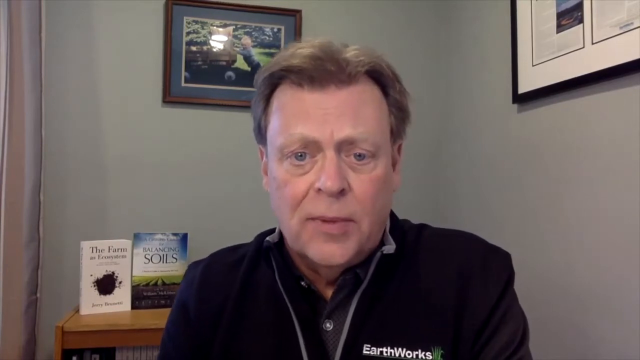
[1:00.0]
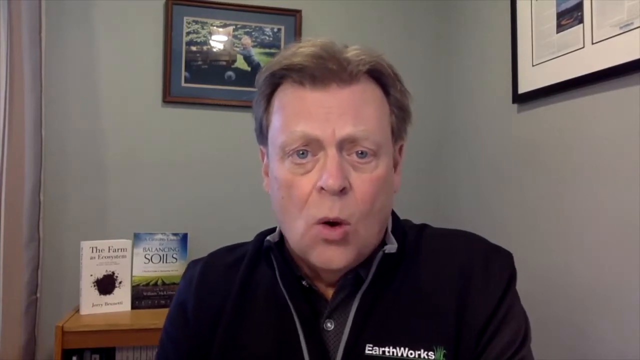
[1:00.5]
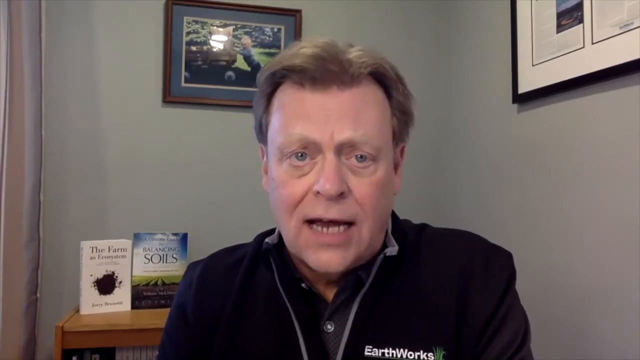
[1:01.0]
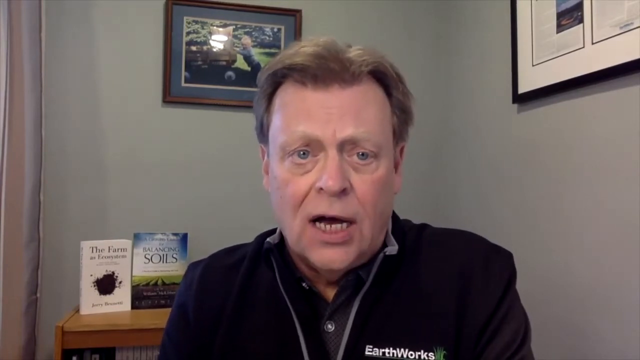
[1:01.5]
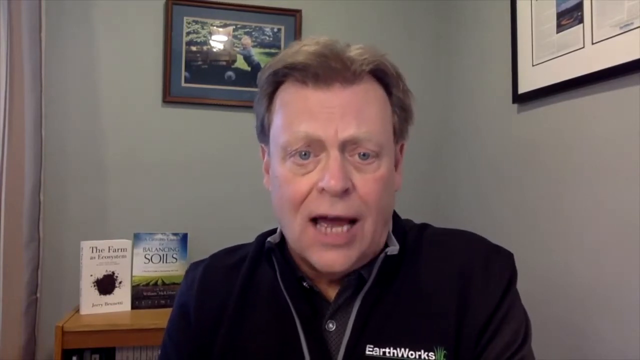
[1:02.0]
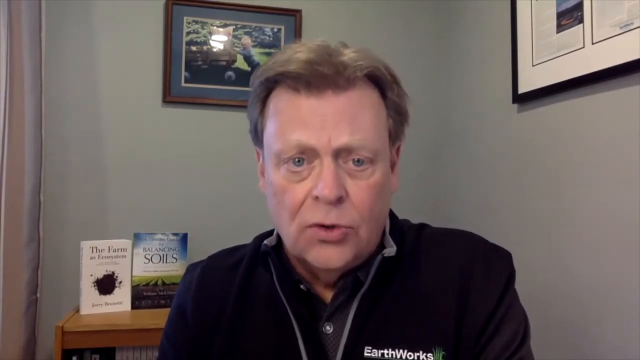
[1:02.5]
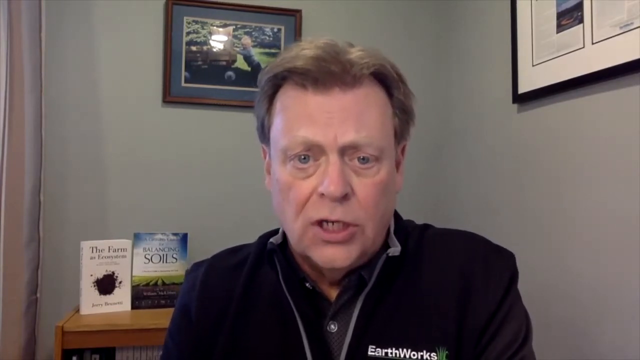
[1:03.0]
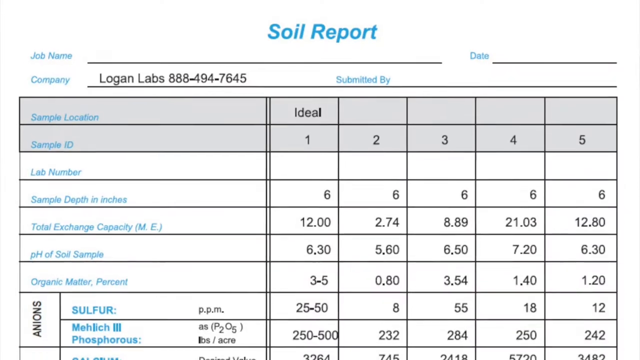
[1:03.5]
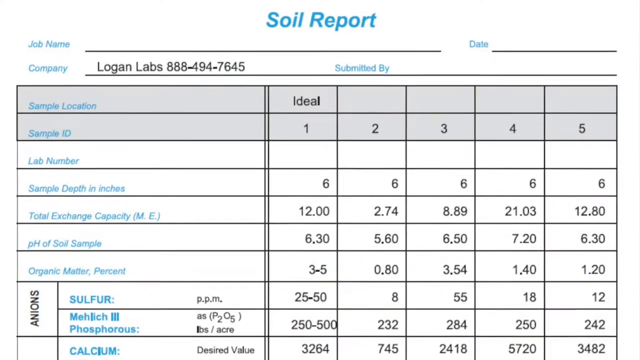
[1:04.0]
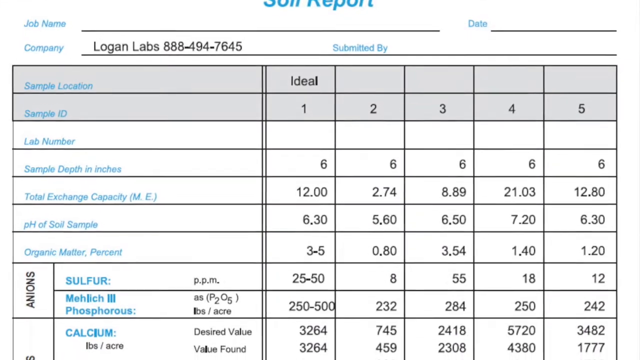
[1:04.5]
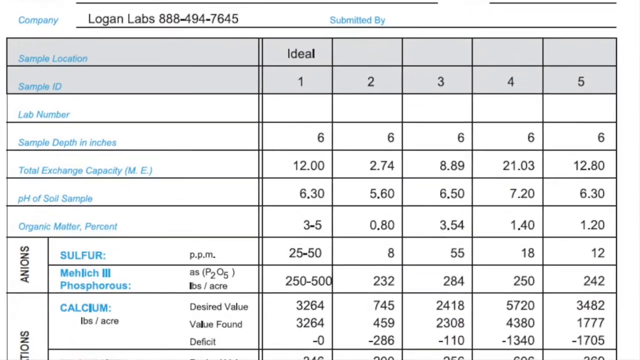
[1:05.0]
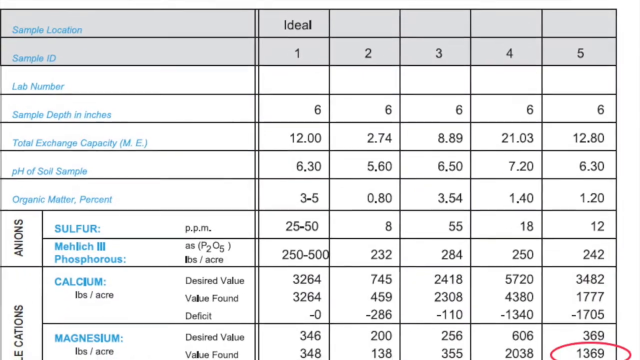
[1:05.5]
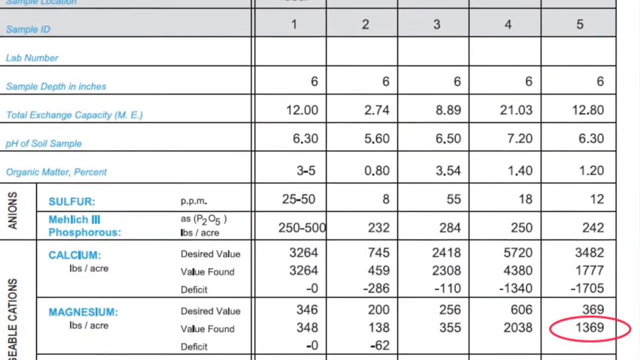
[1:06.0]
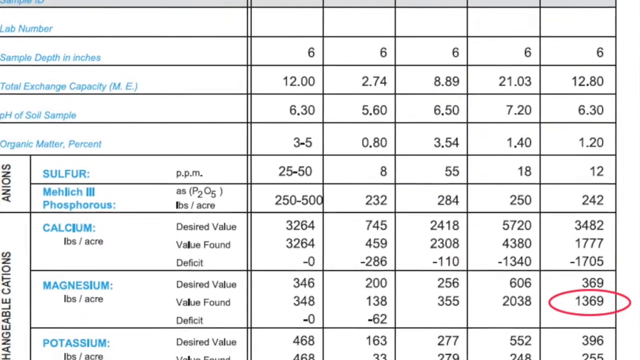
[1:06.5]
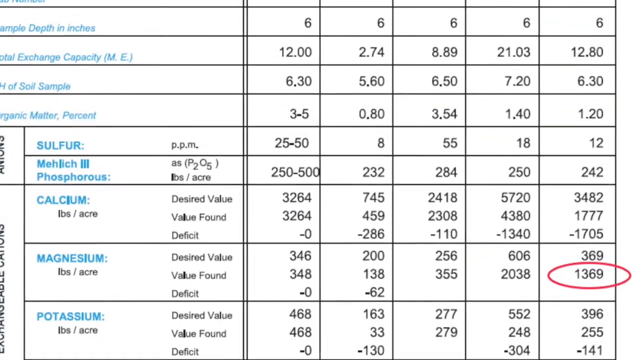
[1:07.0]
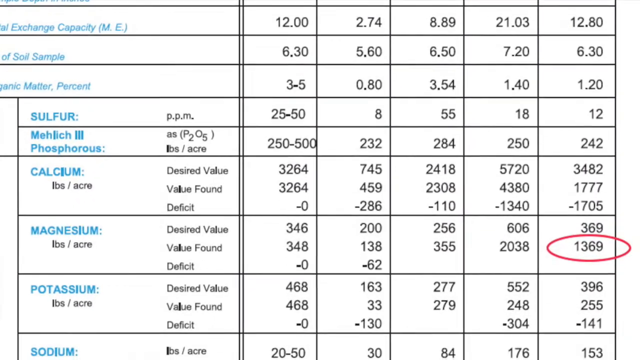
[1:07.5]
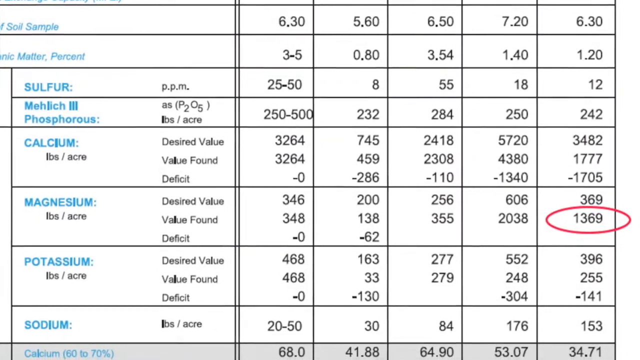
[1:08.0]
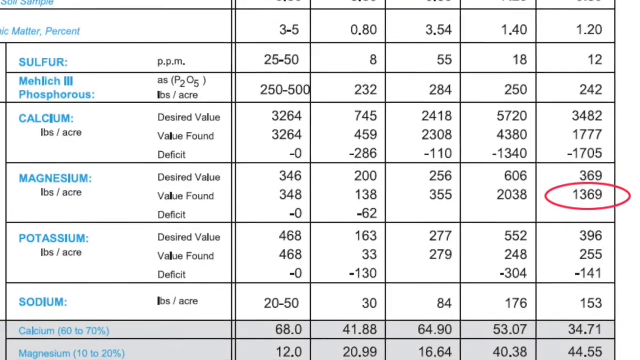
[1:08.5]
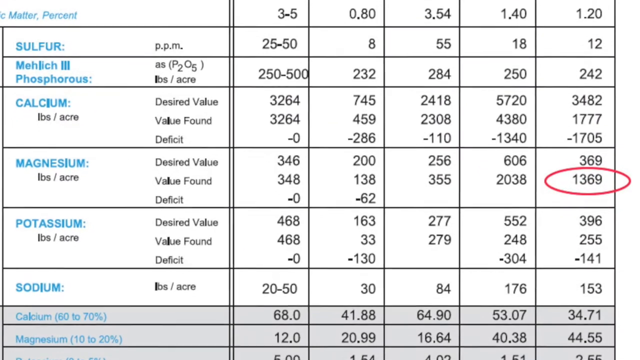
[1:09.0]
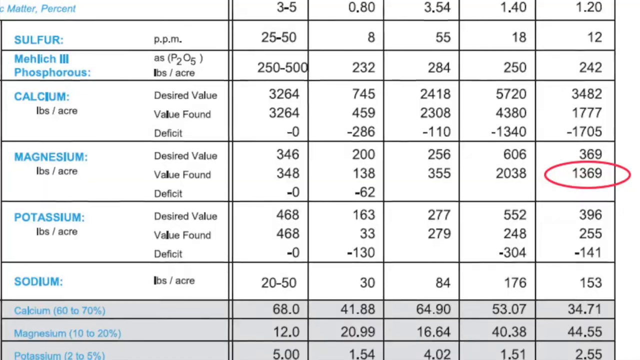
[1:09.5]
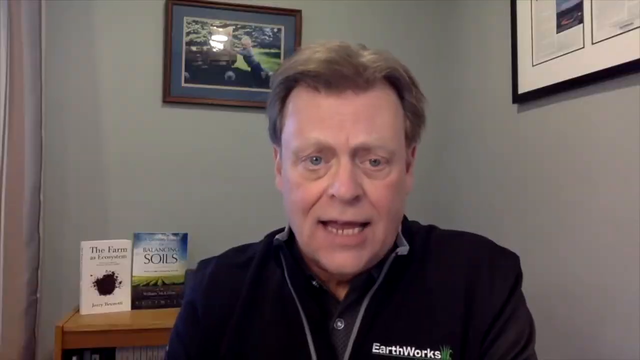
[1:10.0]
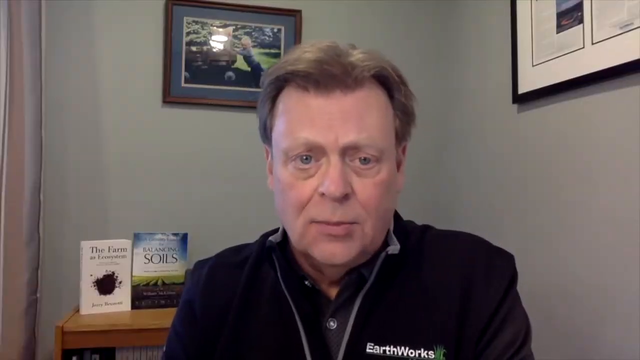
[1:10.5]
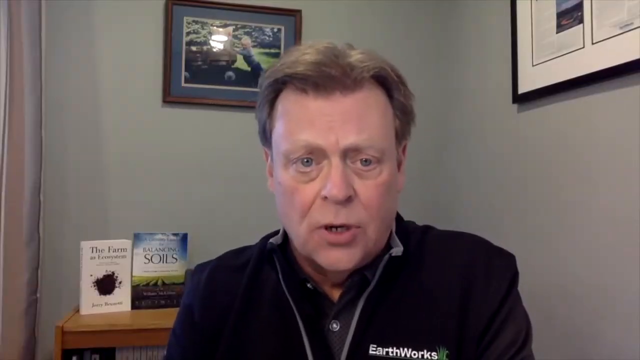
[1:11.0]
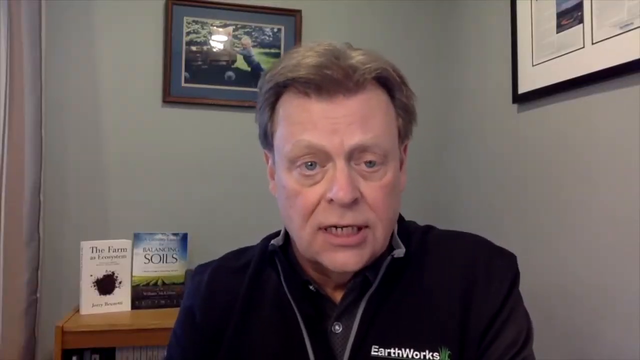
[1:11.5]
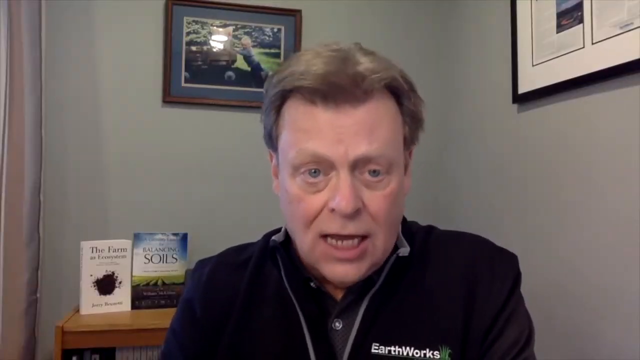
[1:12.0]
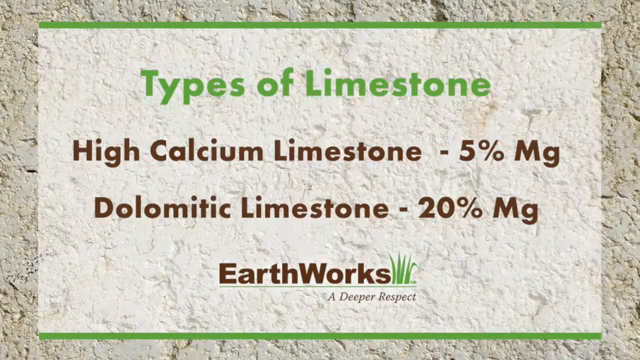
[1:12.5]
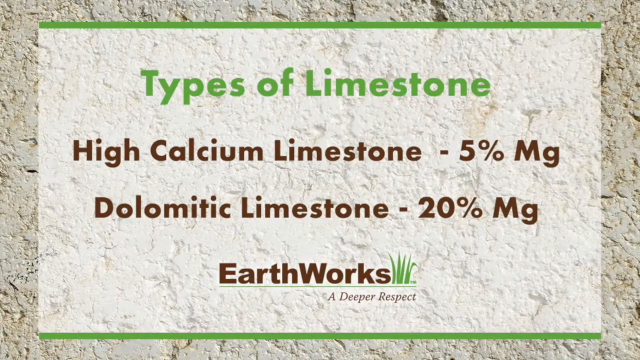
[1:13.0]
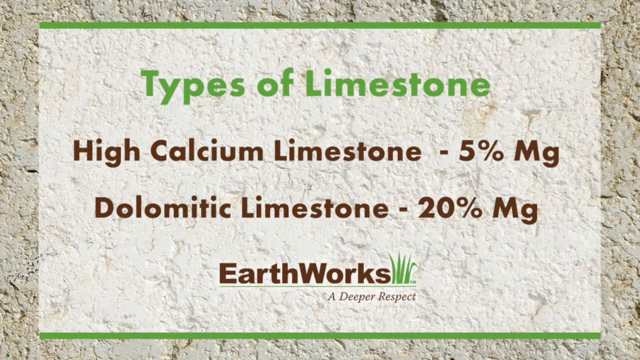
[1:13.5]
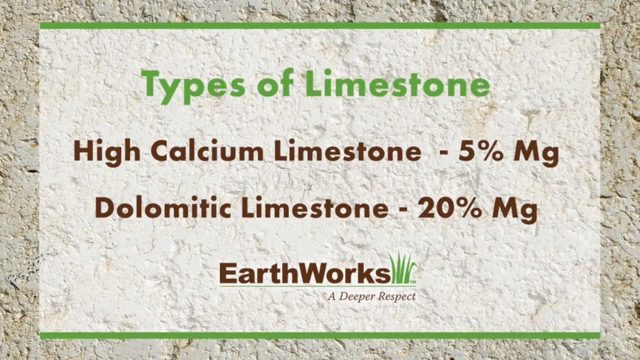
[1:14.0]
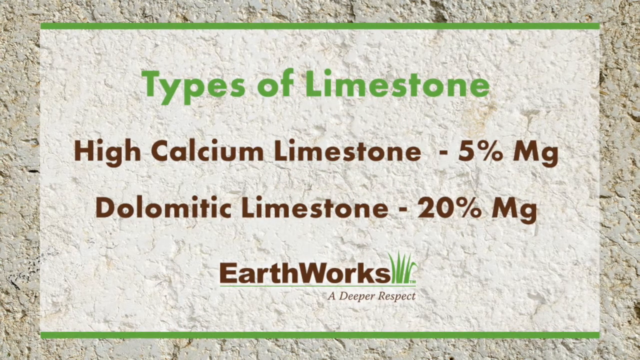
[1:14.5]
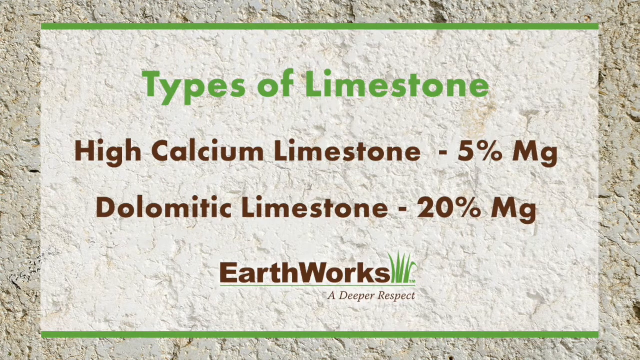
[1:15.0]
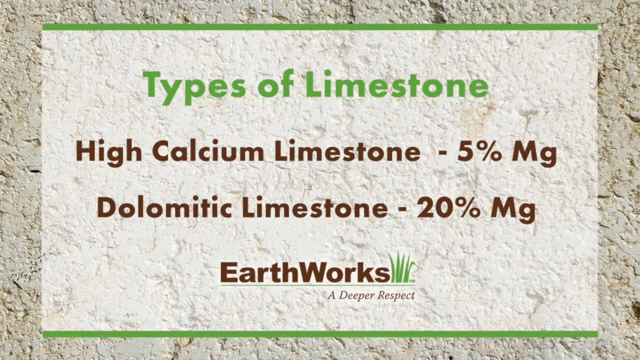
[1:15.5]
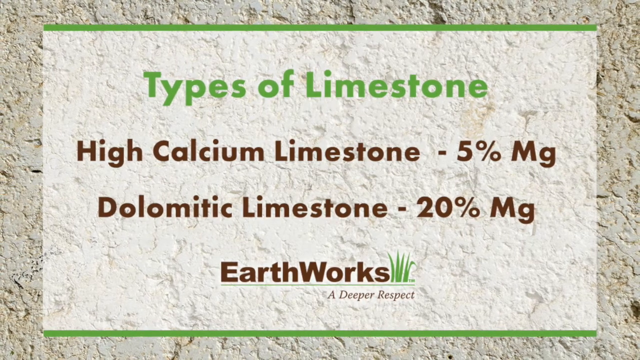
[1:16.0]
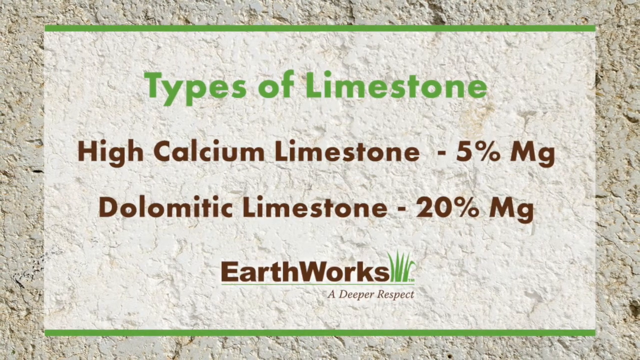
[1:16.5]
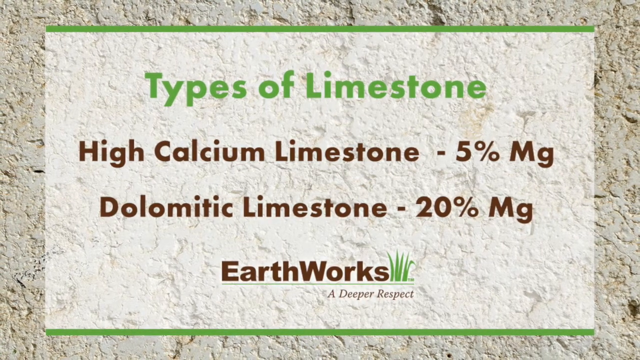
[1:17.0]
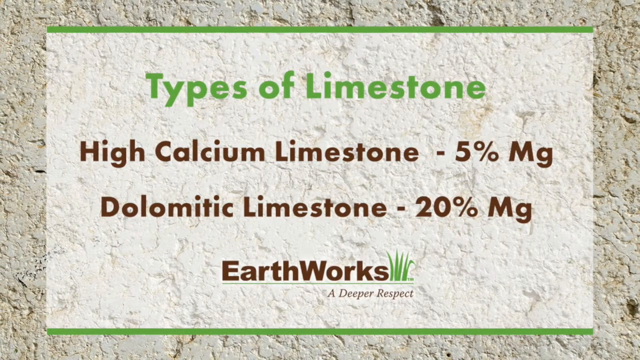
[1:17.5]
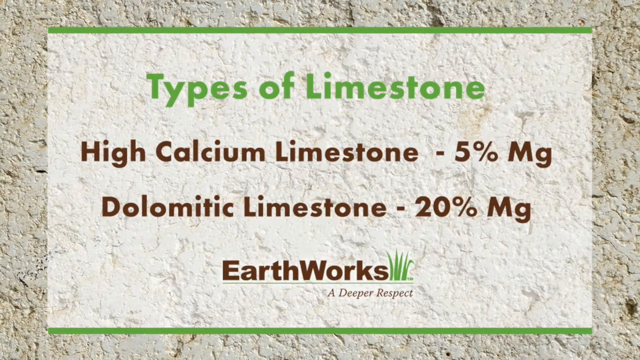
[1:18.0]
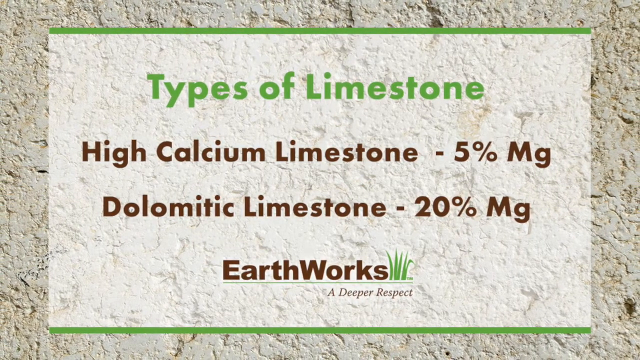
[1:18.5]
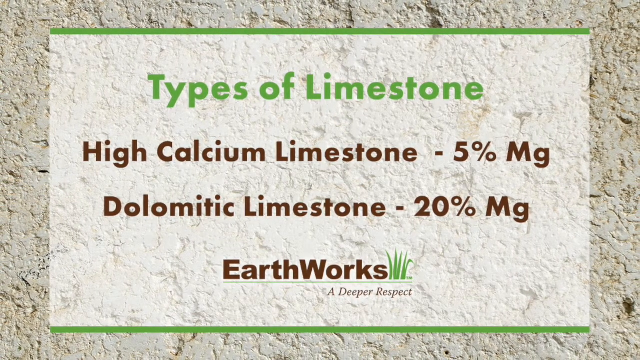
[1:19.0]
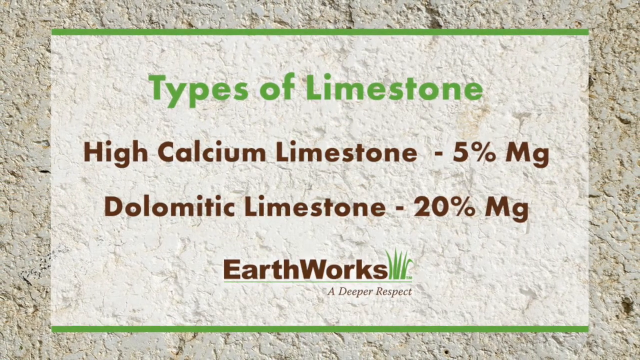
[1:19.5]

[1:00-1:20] Joel Simmons is in his office, speaking toward the camera. The video cuts to the soil report, which shows "Logan Labs" at the top along with the number "888-494-7645" and all the different results. As it scrolls down to magnesium, the value found for magnesium is circled with a red pen and reads 1369. It cuts back to the office scene, then to a different slide that says "Types of Limestone." The first entry reads "high Calcium Limestone, 5% MG," the next "Dolomitic Limestone, 20% MG," and it also shows "Earthworks, A Deeper Respect."